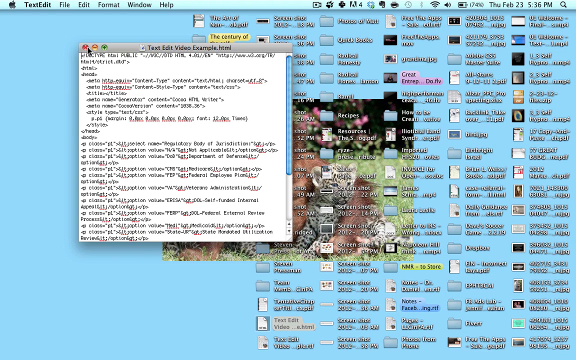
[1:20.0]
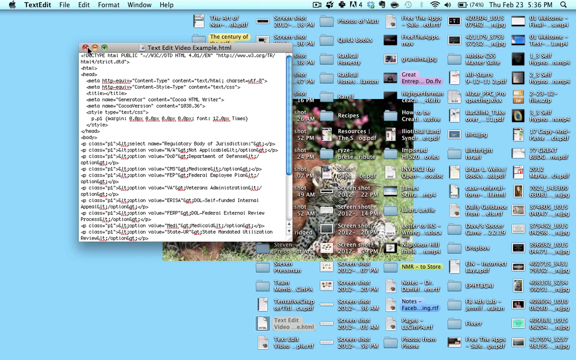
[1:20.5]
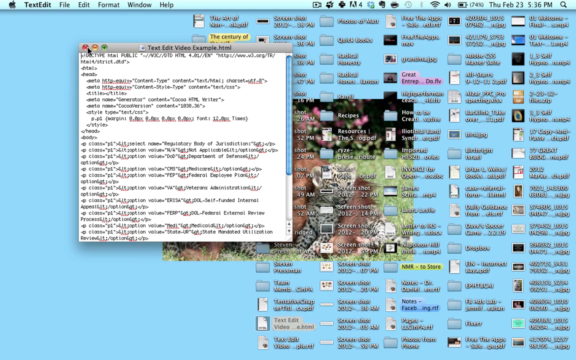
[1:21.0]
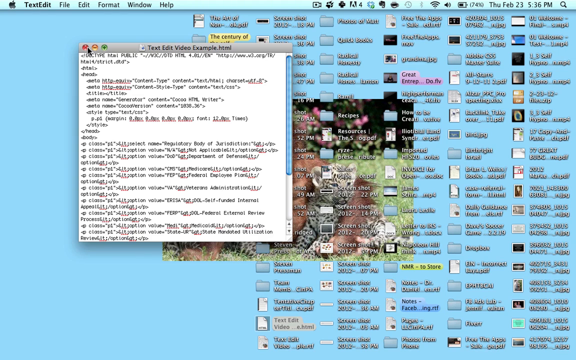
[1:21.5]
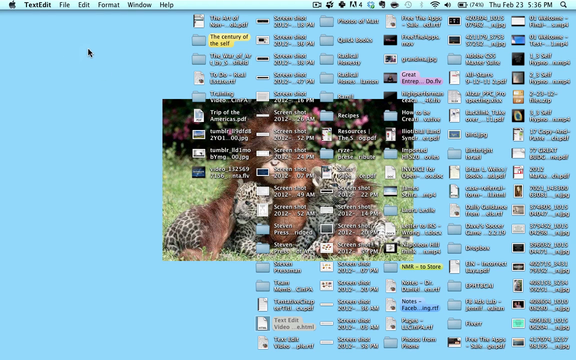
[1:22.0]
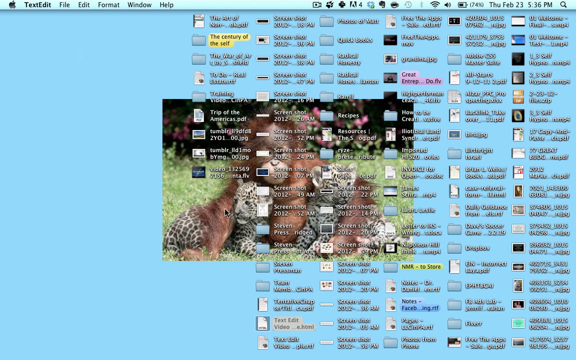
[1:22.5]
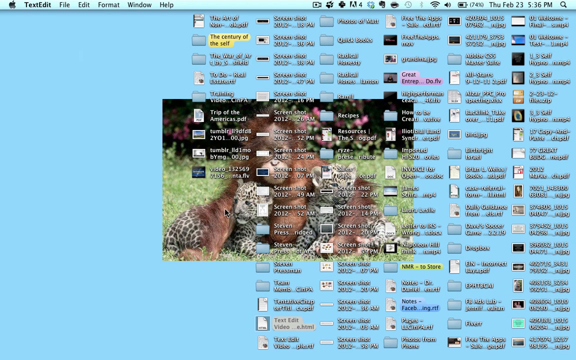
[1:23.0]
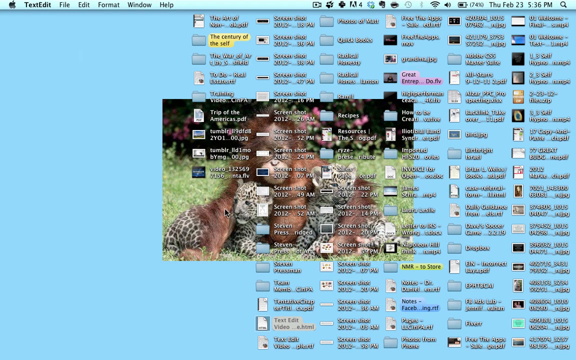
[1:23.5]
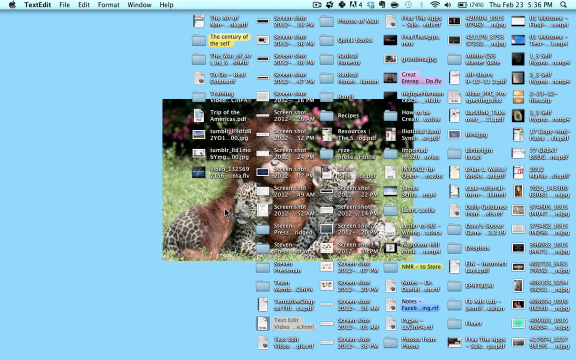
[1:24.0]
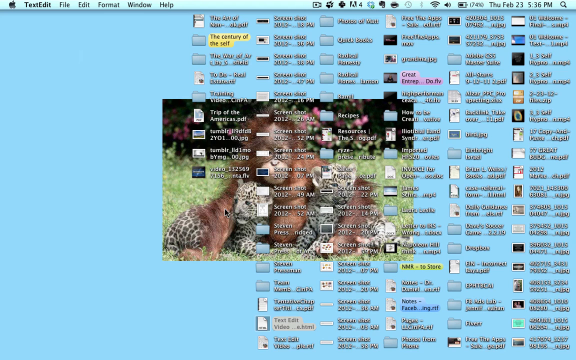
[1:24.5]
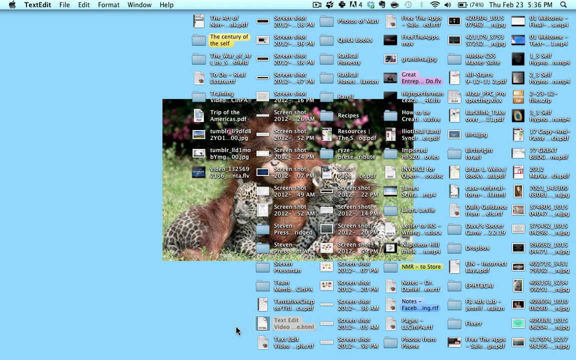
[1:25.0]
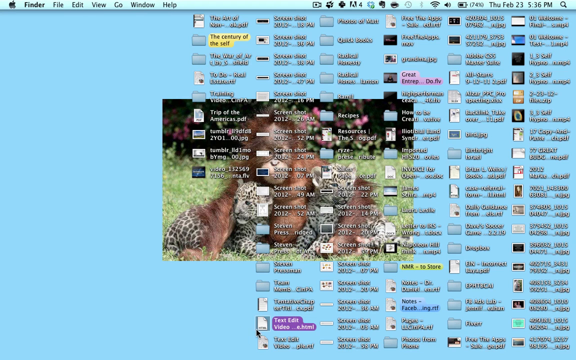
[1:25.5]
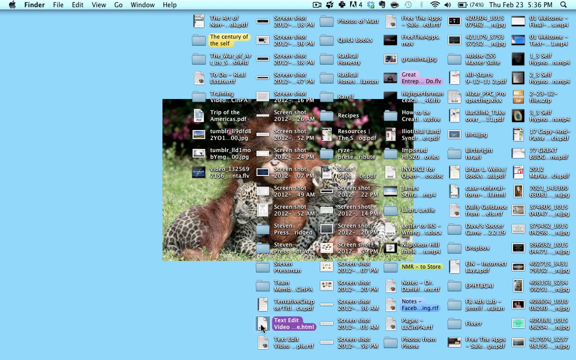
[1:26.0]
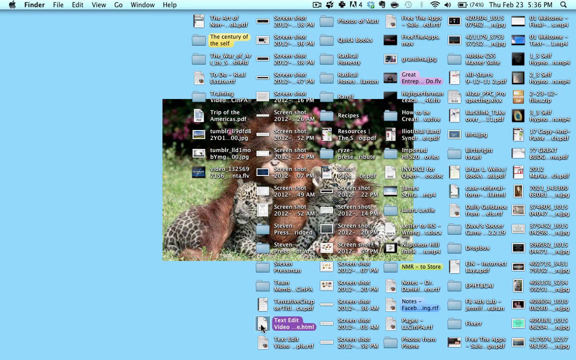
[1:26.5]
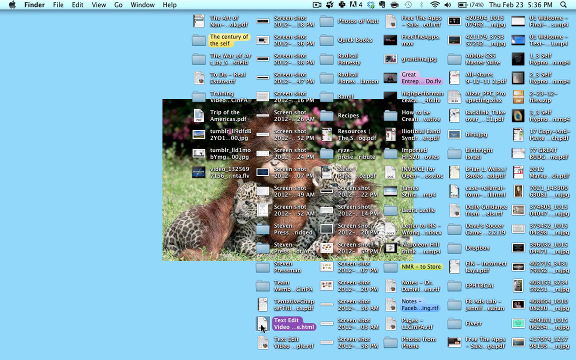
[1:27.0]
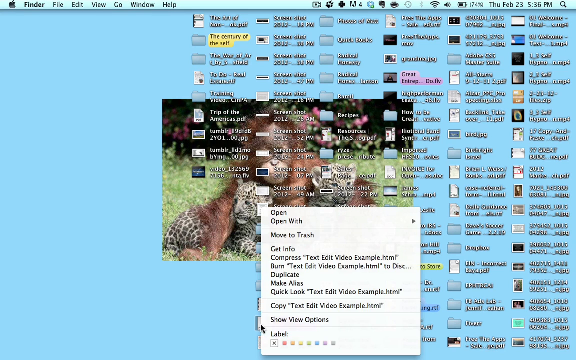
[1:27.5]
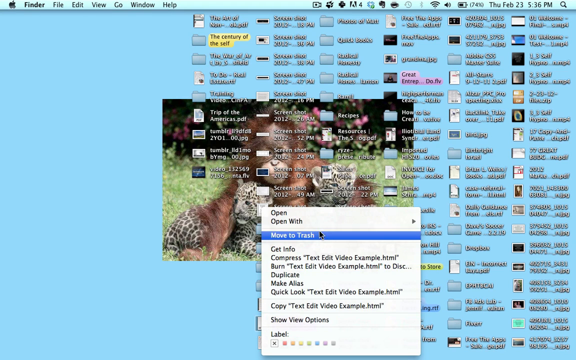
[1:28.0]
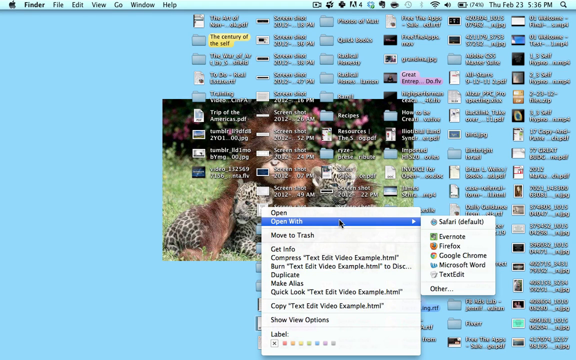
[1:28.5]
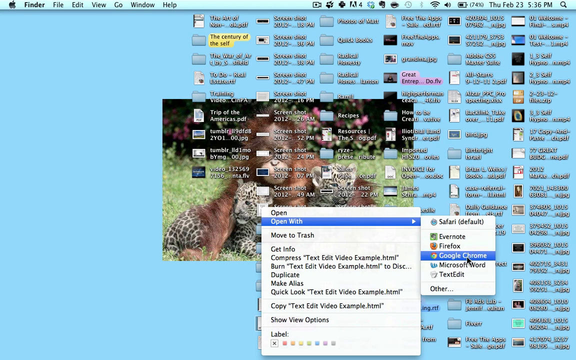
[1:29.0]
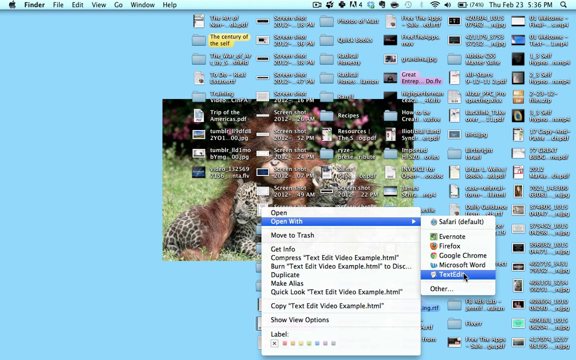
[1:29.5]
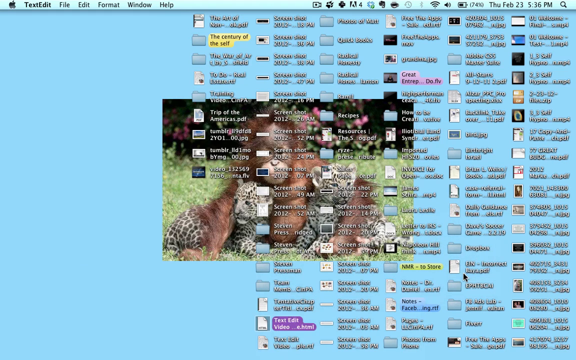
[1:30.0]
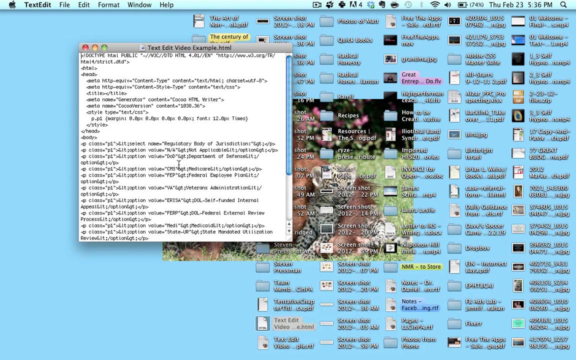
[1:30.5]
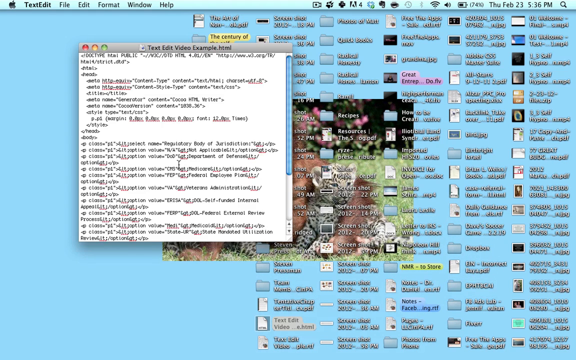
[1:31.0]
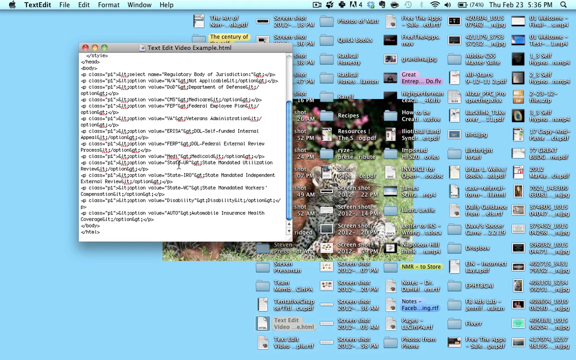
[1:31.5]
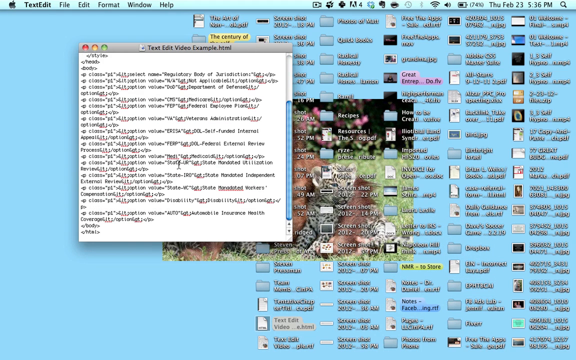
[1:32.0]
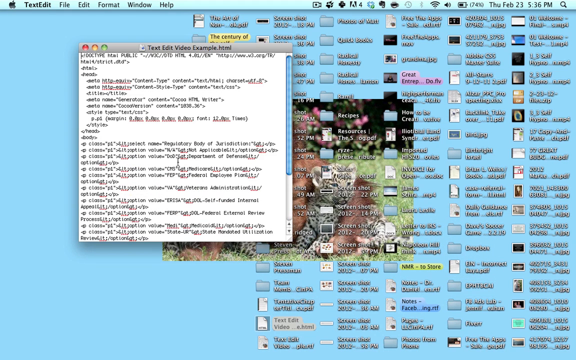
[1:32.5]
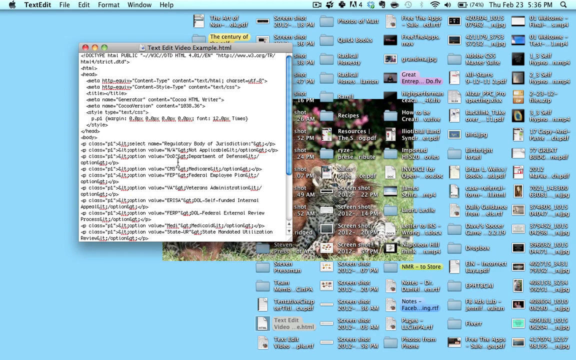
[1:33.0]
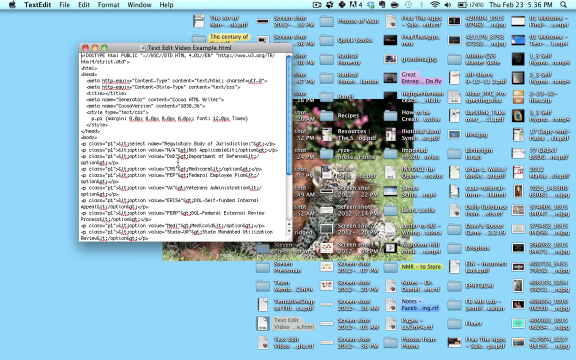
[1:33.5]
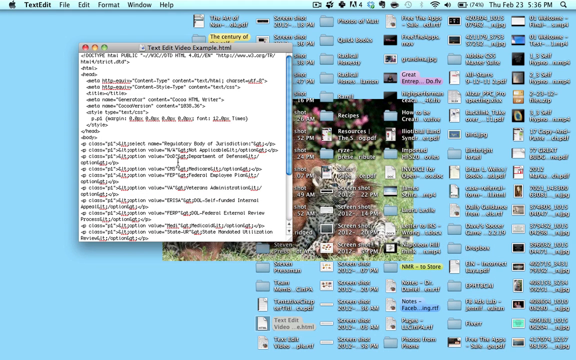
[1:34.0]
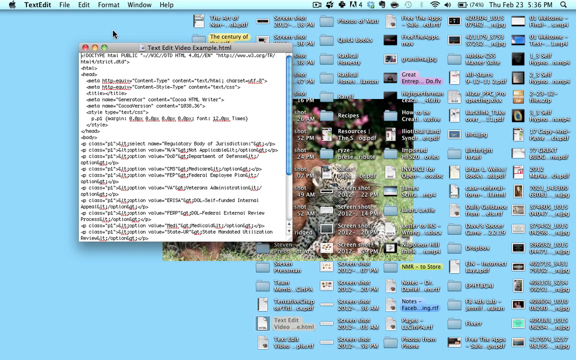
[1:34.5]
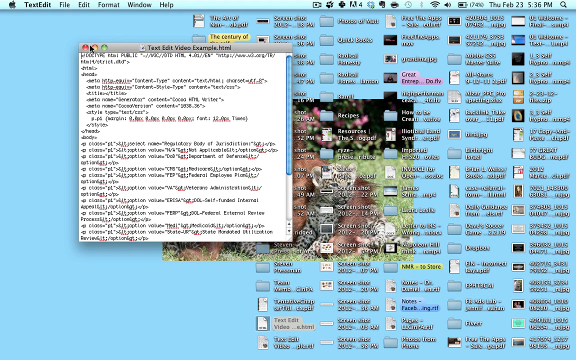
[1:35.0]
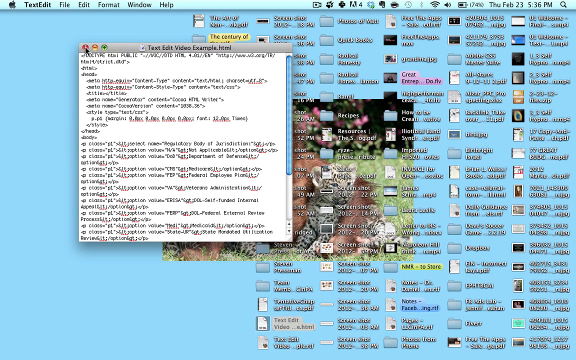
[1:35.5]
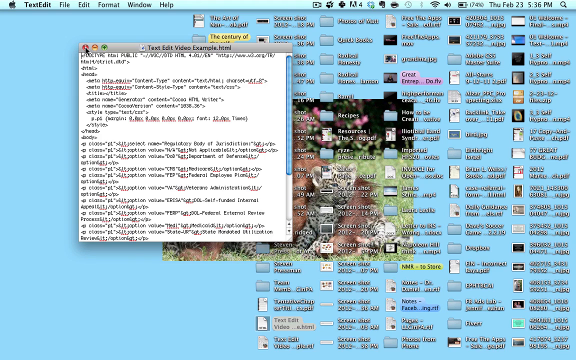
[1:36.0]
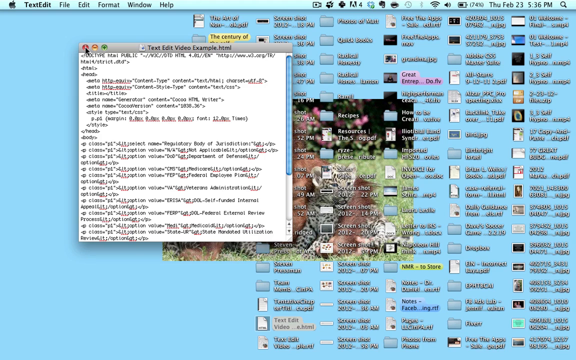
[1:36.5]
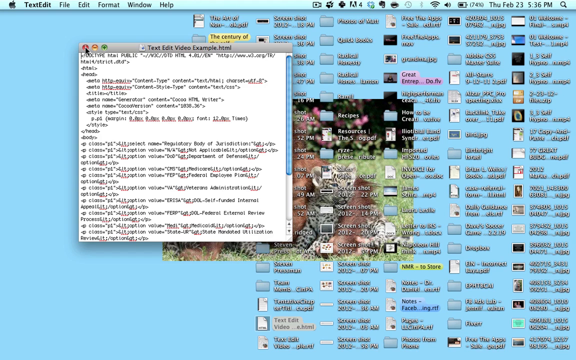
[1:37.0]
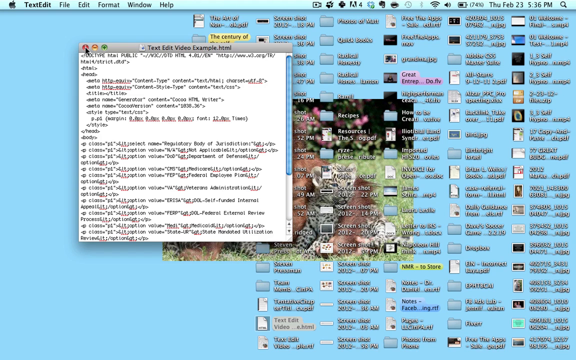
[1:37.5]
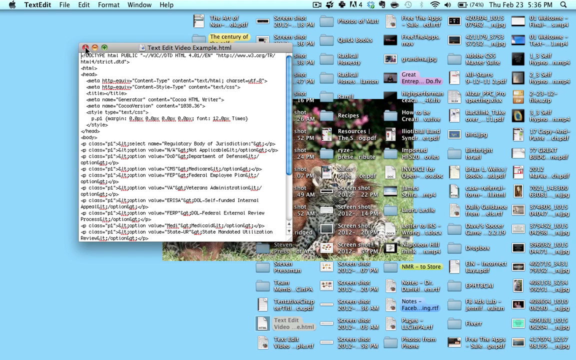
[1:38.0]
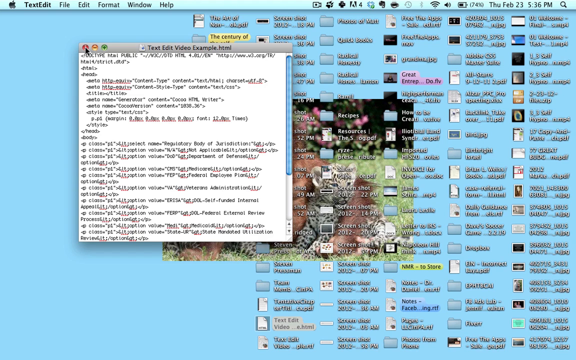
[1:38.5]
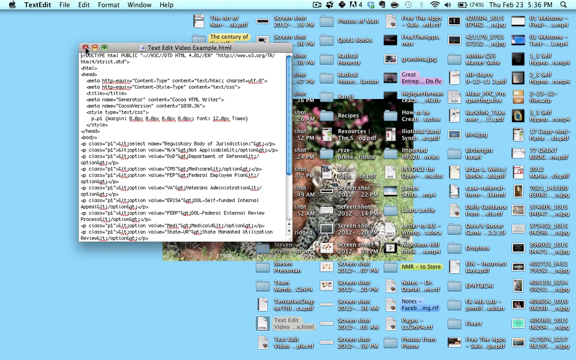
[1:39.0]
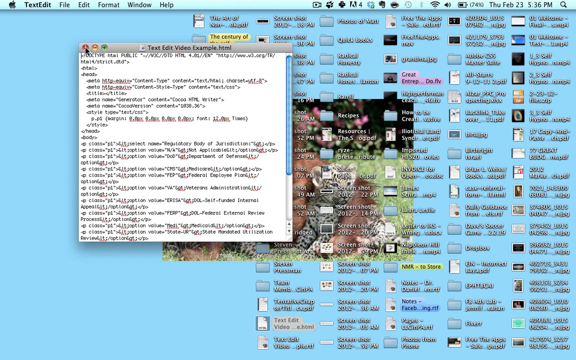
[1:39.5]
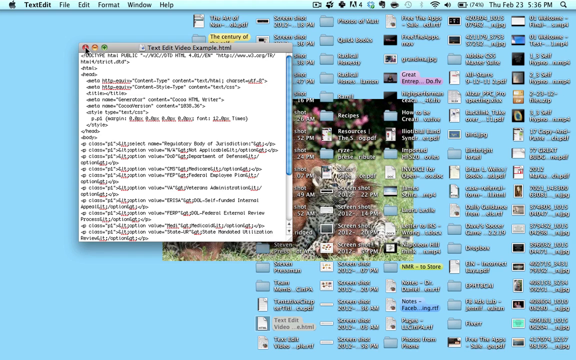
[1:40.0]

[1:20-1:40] That window is closed. The cursor then clicks the same TextEditVideoExample.html icon on the desktop, opening the right-click menu. The cursor moves down to the Open With submenu, then right into the submenu and down to the TextEdit program, the program enabled earlier through the Other option. It hovers over it and clicks. TextEditVideoExample.html opens in TextEdit in the middle of the screen, slightly left. The document is scrolled down to the bottom and then back up. The cursor moves back to the red close window button and hovers there for a few seconds. The video ends with the TextEdit window still open and the cursor still hovering above the red close window button.